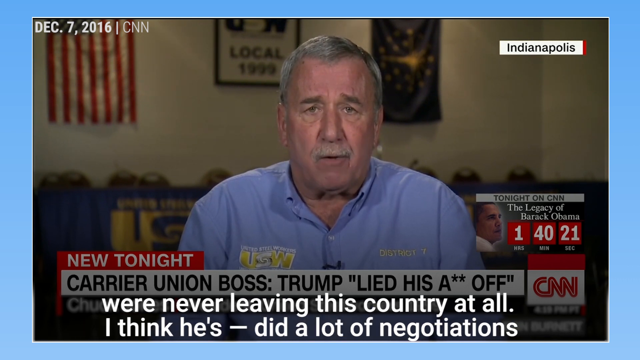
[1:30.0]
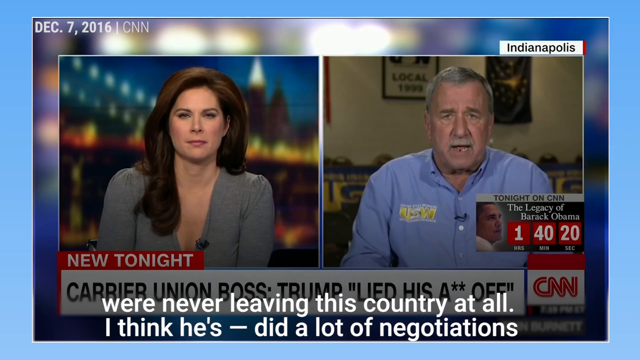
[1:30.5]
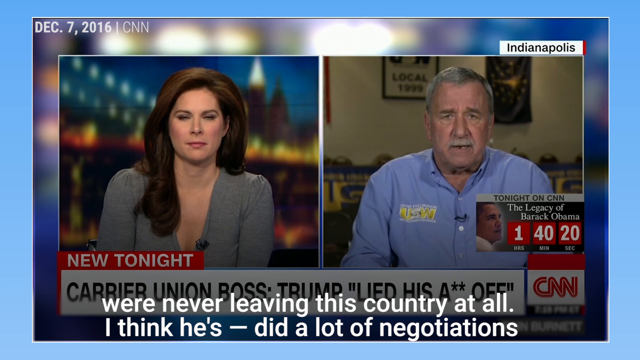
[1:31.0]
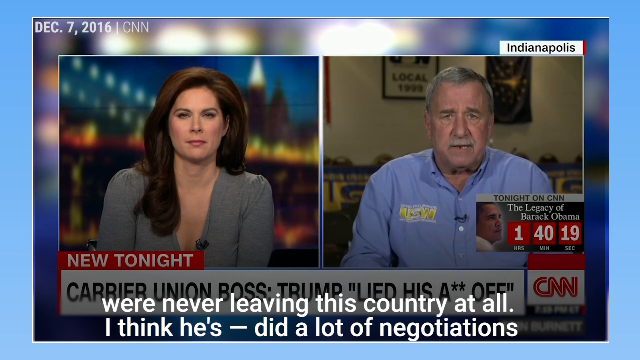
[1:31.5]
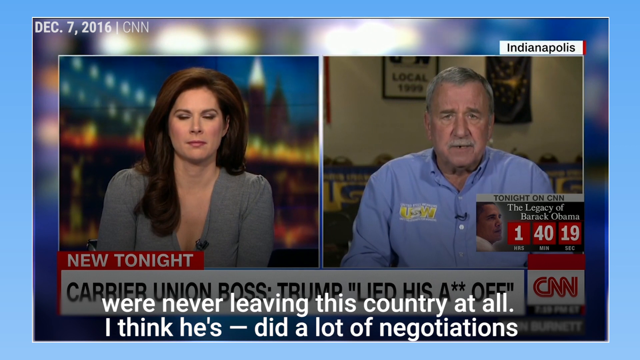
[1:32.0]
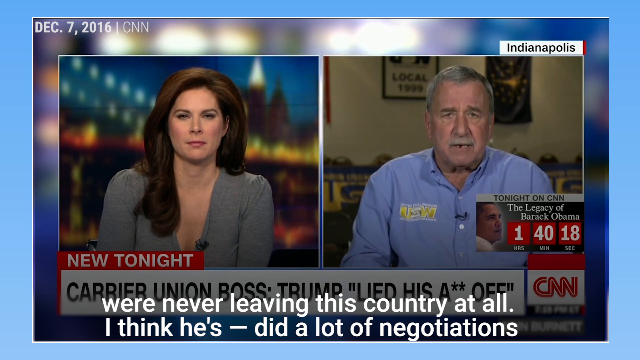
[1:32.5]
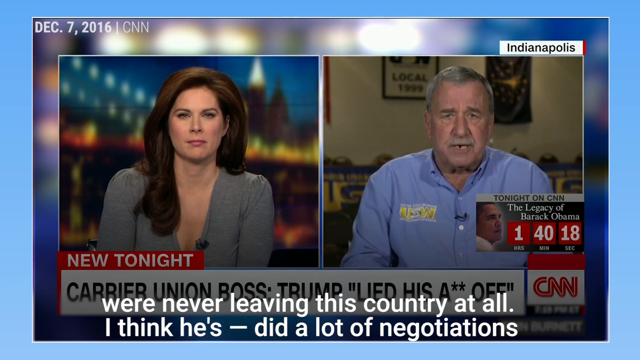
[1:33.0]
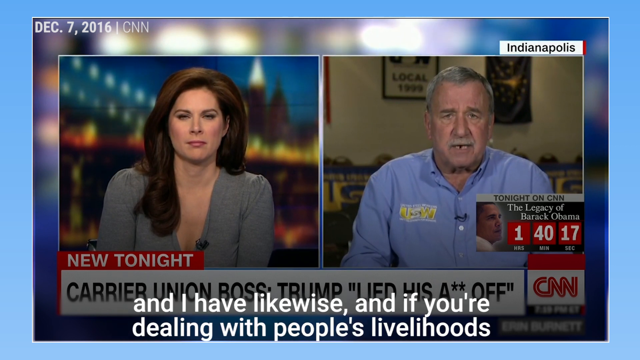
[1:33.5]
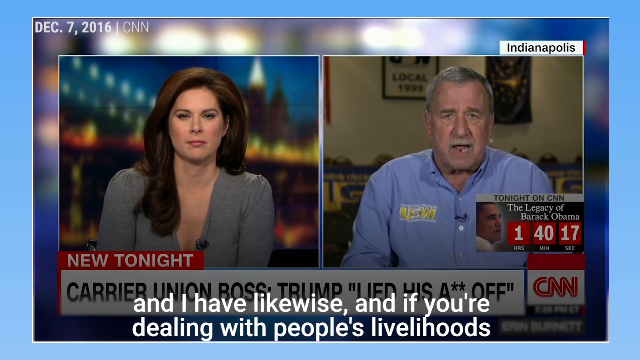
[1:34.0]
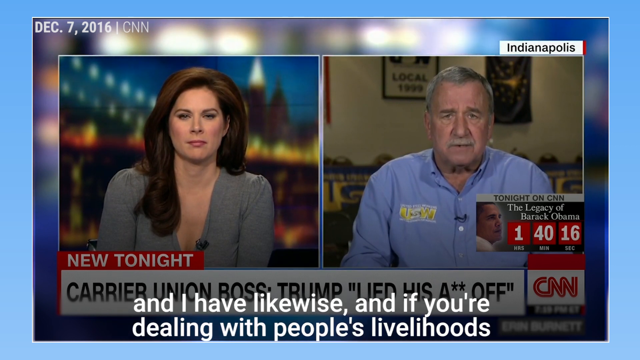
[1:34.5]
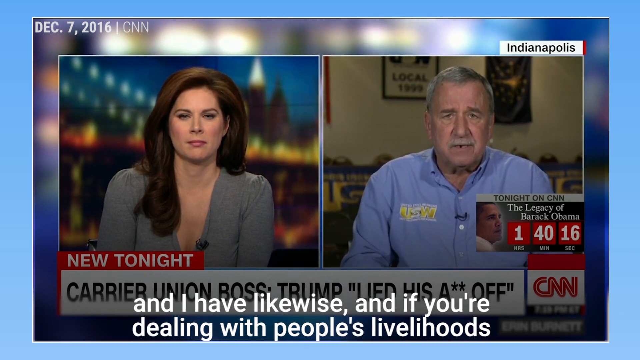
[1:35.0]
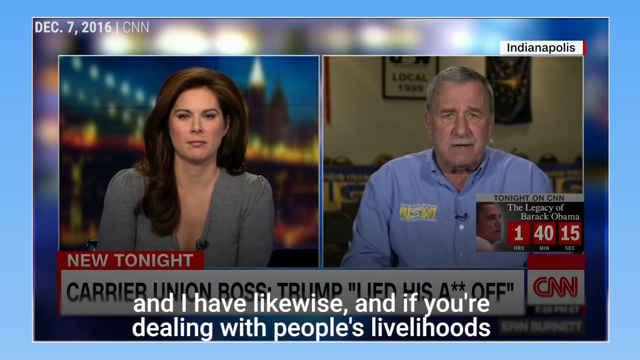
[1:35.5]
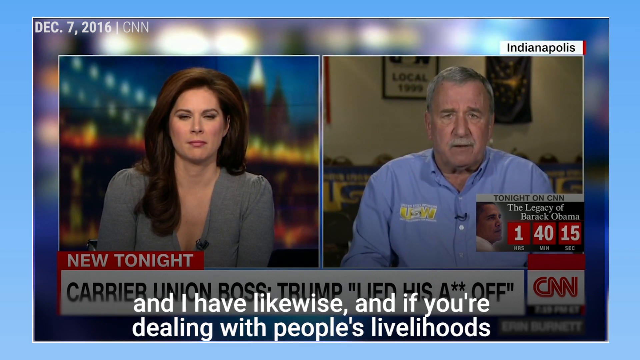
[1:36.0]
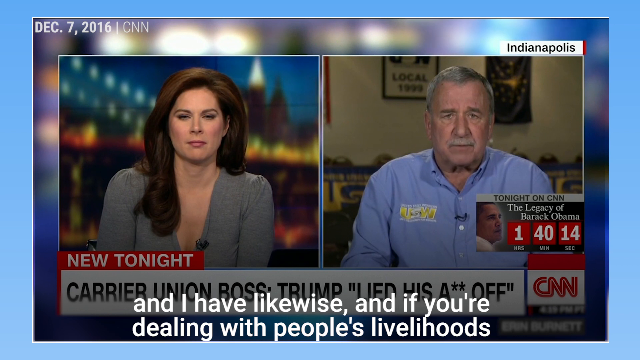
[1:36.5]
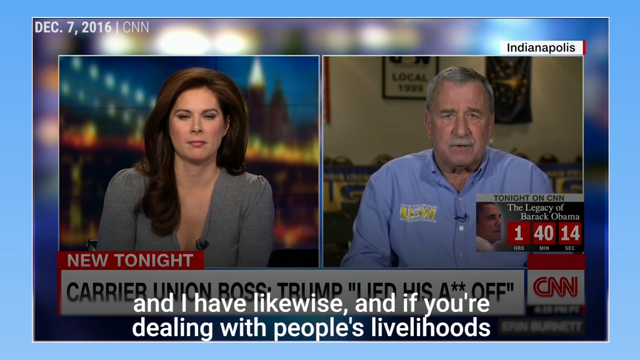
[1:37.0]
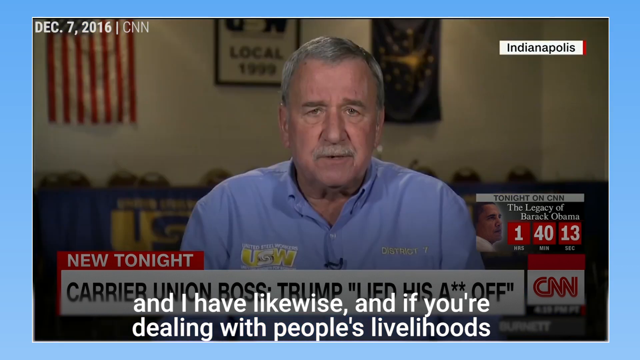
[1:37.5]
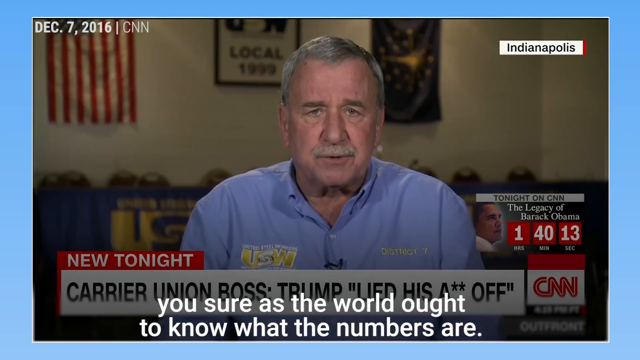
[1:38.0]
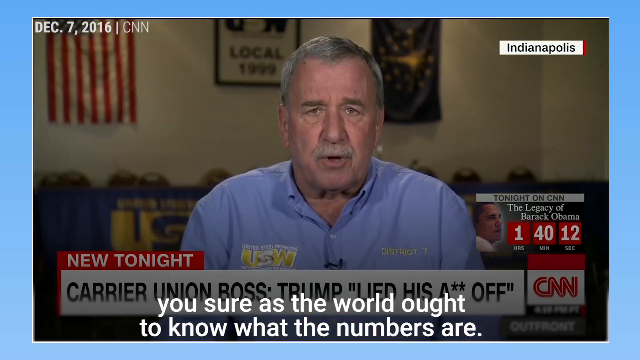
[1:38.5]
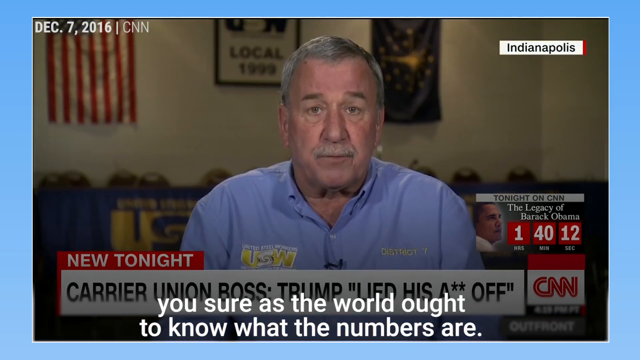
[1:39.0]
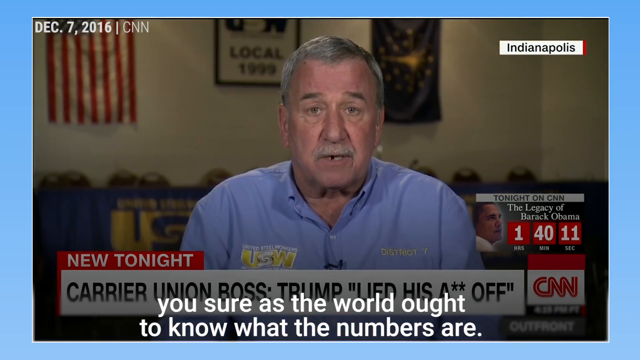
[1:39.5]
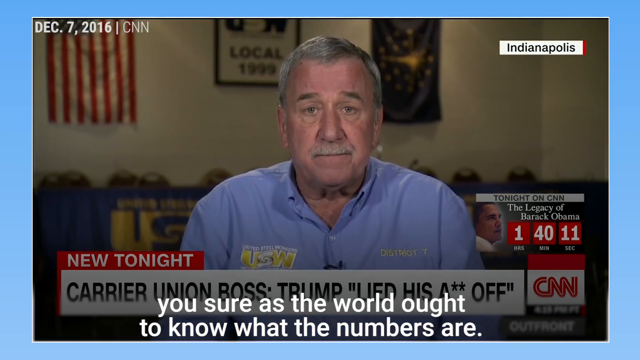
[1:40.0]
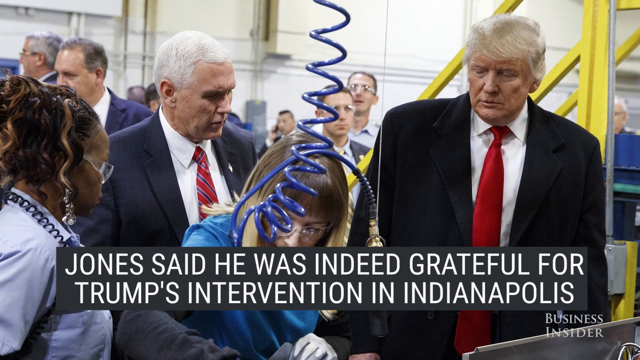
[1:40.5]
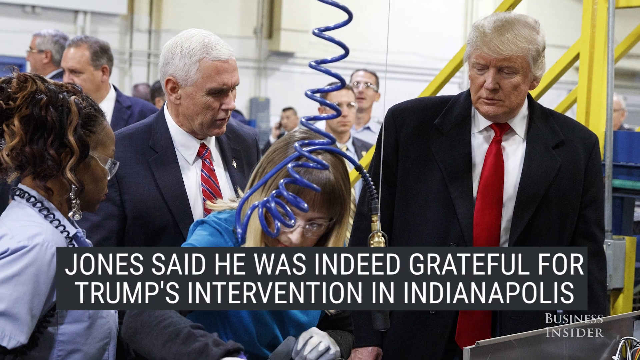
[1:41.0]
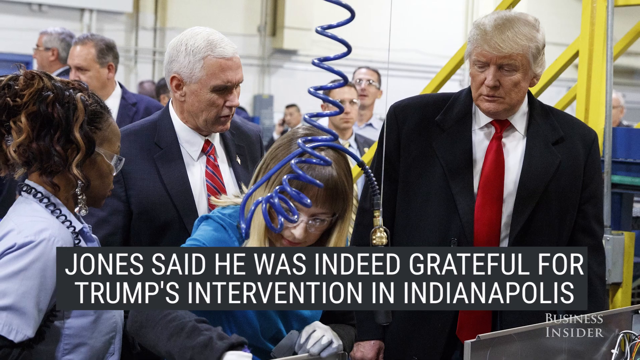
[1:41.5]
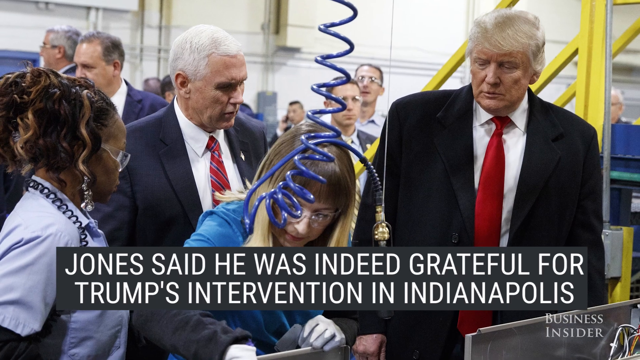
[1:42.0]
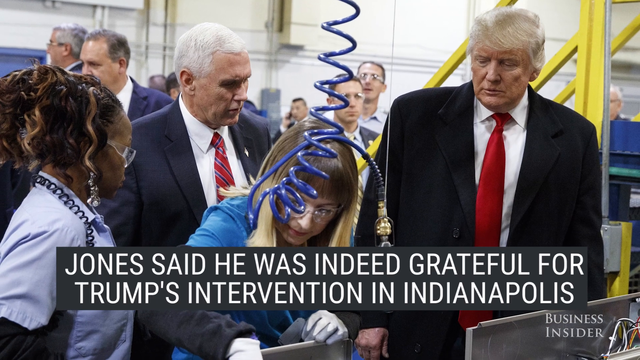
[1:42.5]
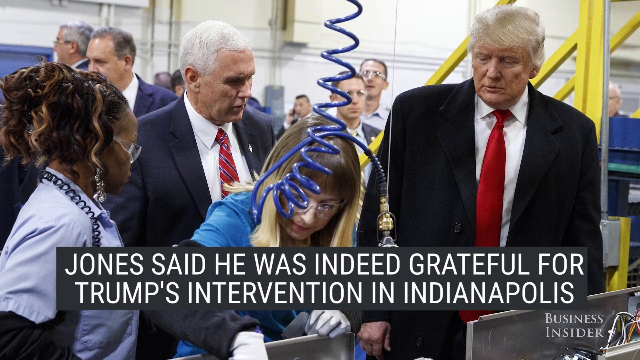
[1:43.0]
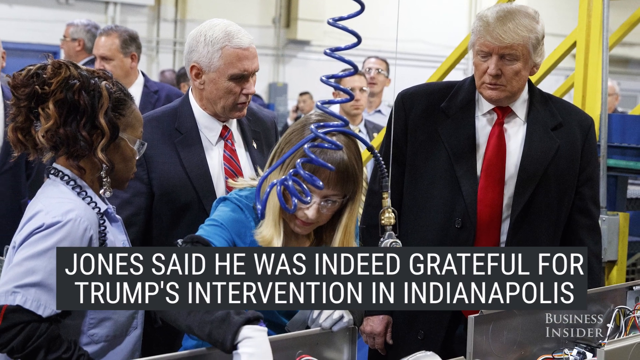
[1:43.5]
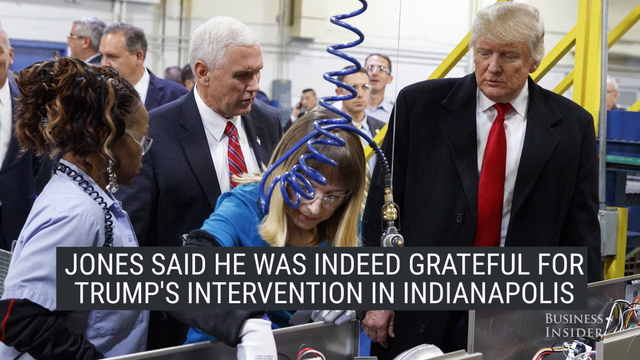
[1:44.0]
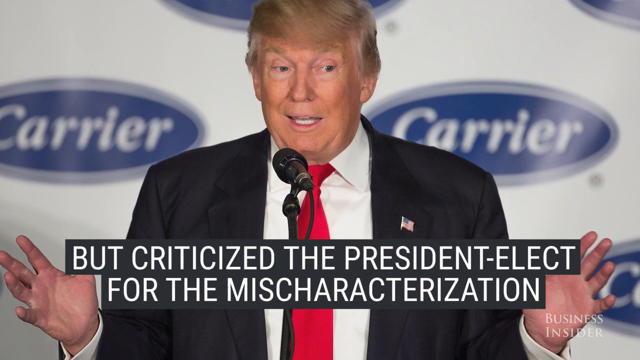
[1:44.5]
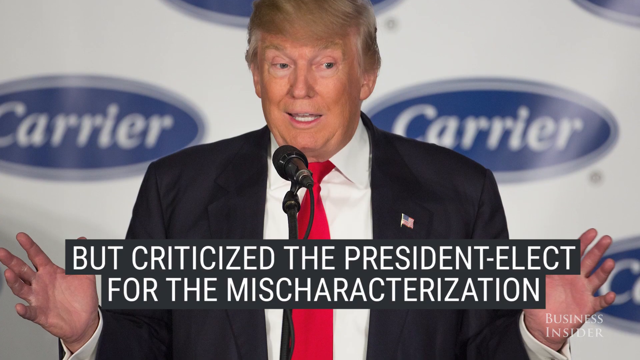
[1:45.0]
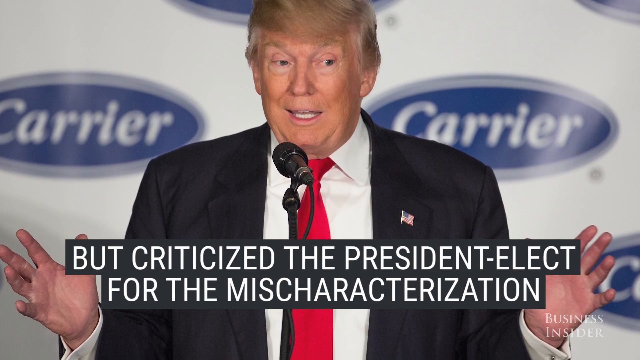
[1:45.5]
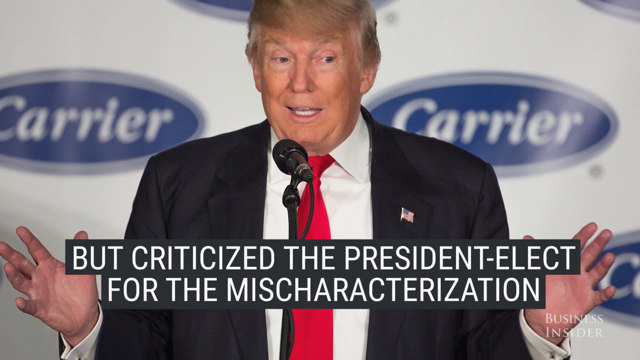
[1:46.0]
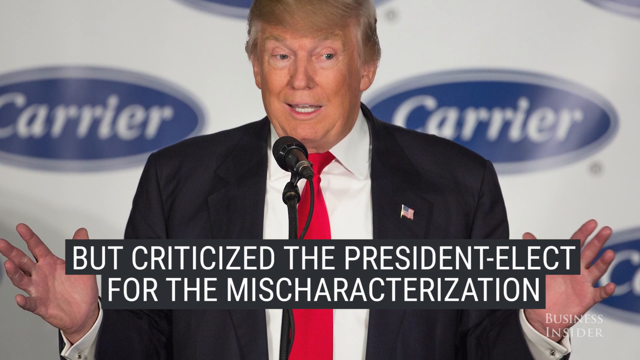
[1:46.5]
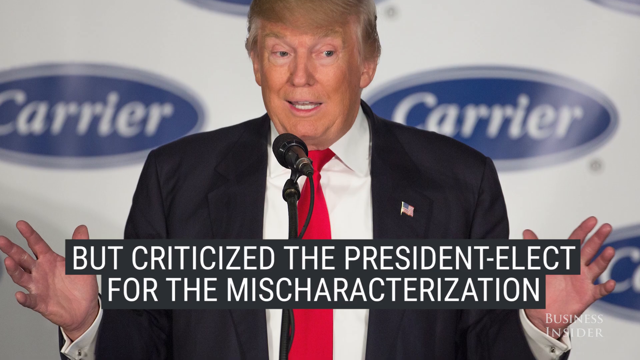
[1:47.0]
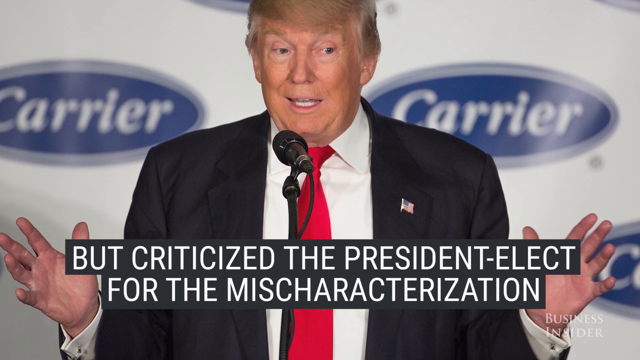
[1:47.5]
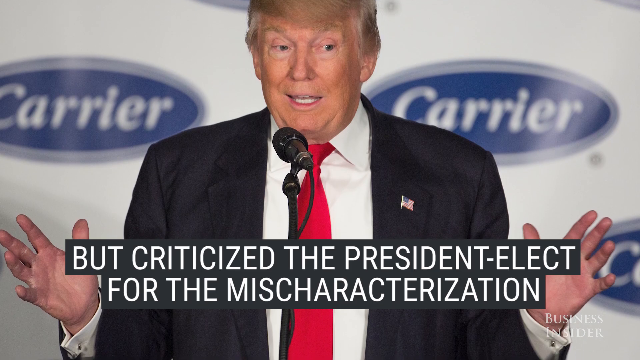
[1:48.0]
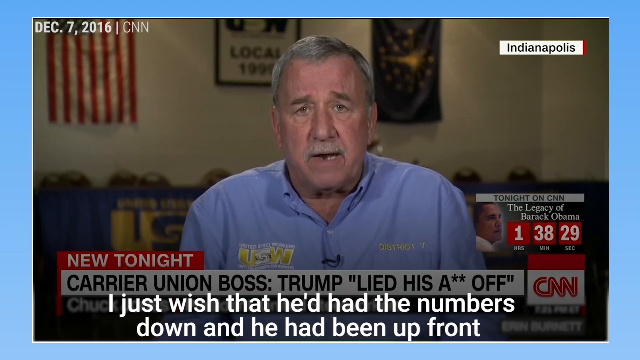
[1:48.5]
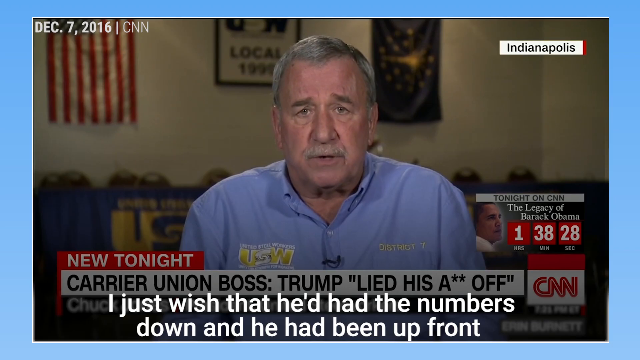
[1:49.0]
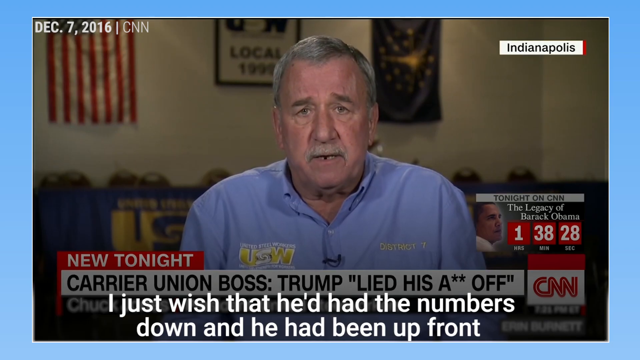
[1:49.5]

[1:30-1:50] Several other employees at the Carrier facility are shown. Some appear to be African American, both males and females, and there are also Caucasian males all together. Some appear to be holding their phones in their hands, while others appear to be staring. An employee at the very front appears to be holding on to what appears to be a metal basket. Caution tape reads "do not cross." As the large crowd is shown, text at the bottom reads "an interview with CNN, Jones elaborated on what jobs were actually saved." The video transitions back to the CNN hostess and the union boss as they continue to speak. A graphic on the far right reads "tonight on CNN, the legacy of Barack Obama," with one hour, 41 minutes and several seconds left.